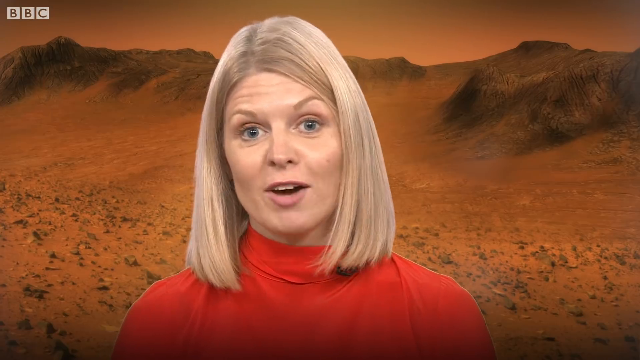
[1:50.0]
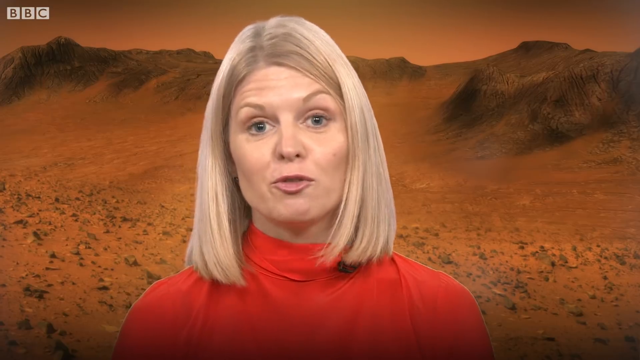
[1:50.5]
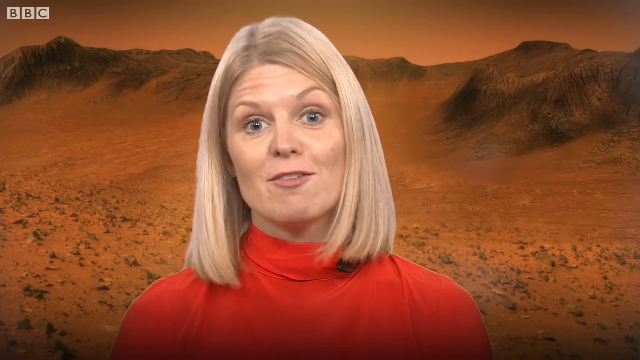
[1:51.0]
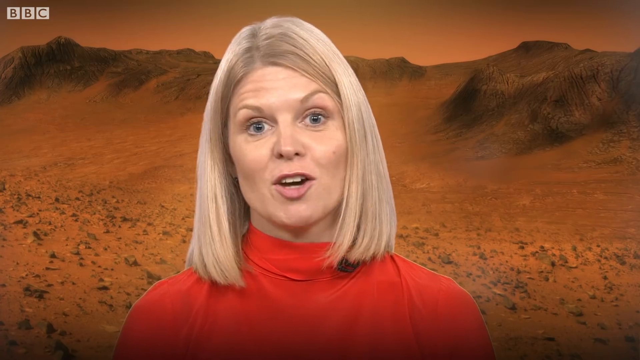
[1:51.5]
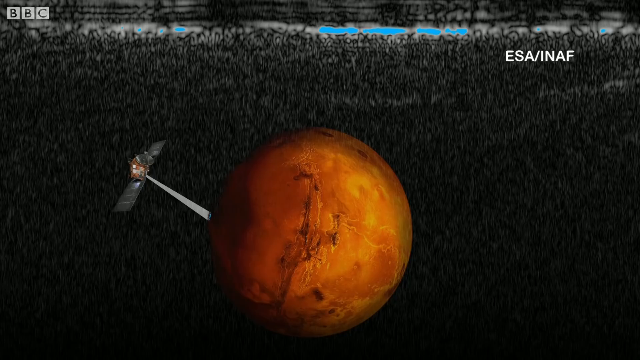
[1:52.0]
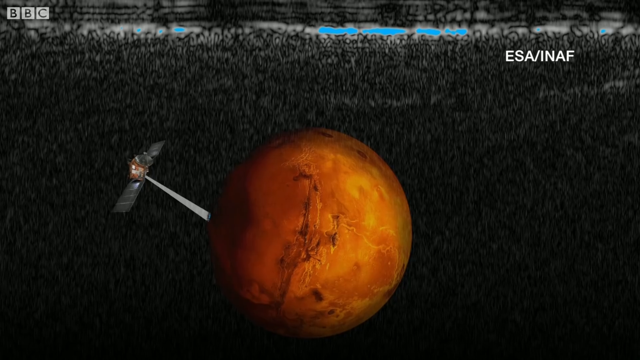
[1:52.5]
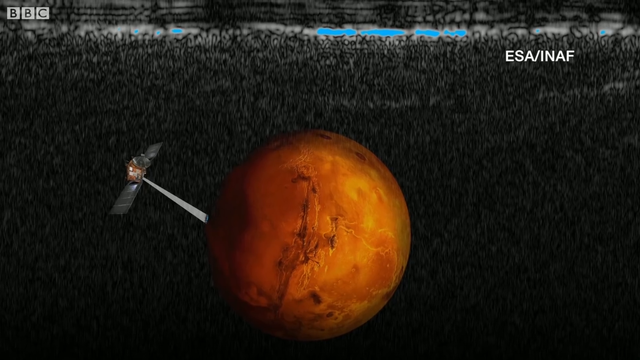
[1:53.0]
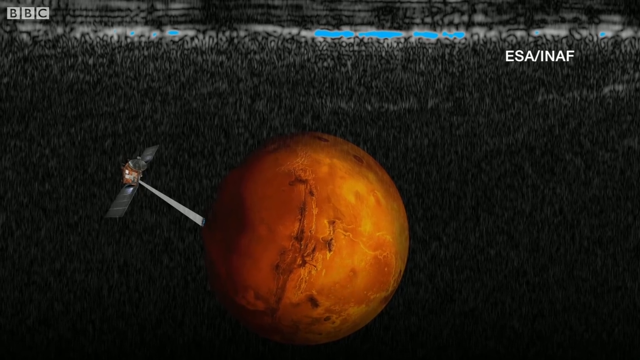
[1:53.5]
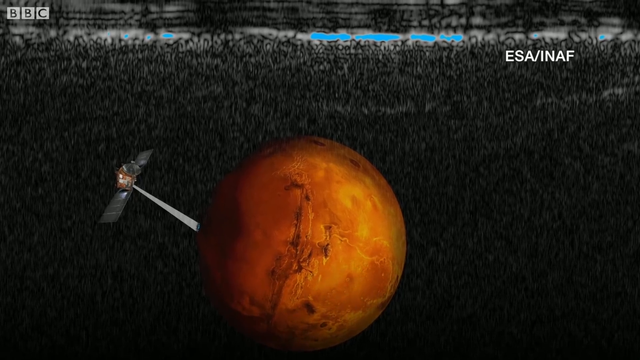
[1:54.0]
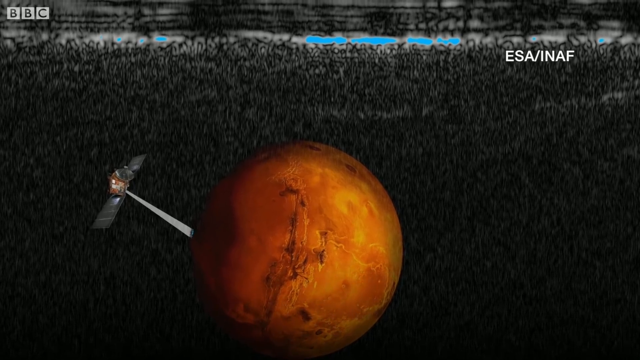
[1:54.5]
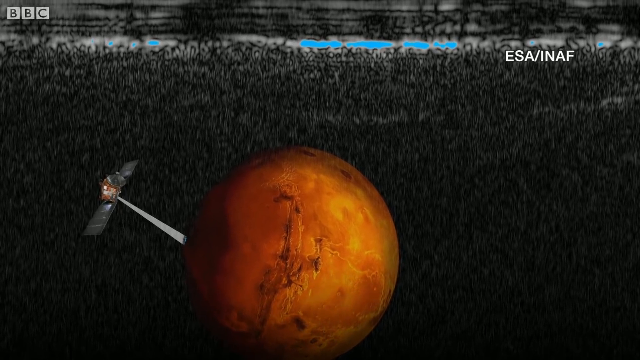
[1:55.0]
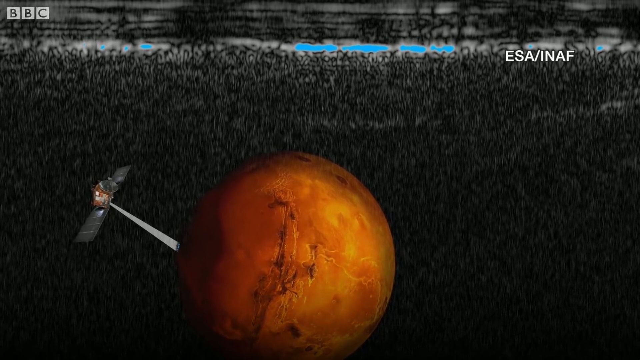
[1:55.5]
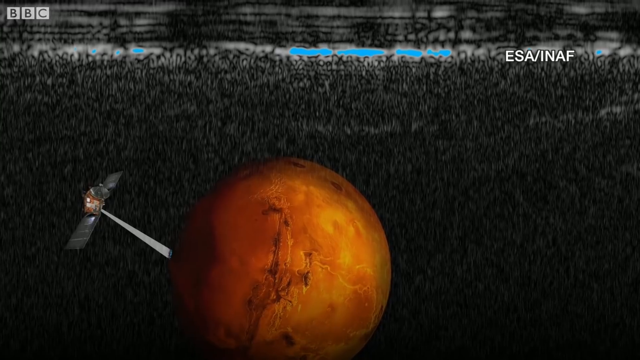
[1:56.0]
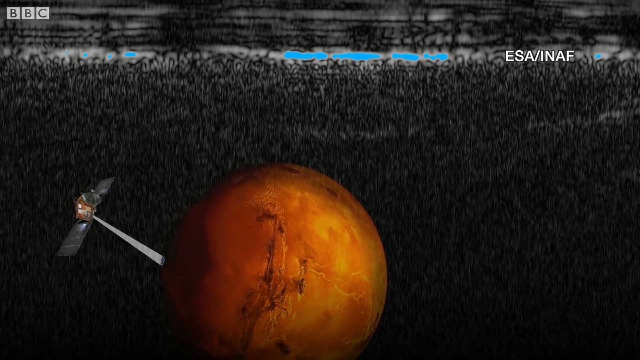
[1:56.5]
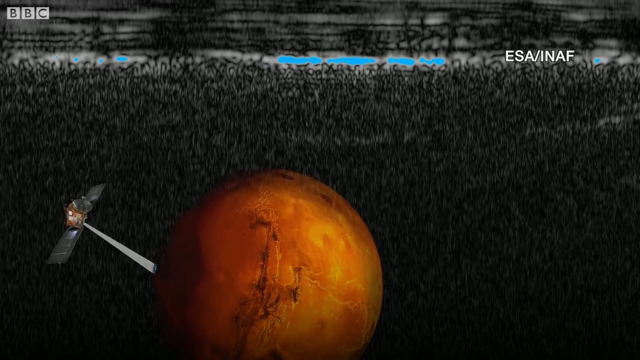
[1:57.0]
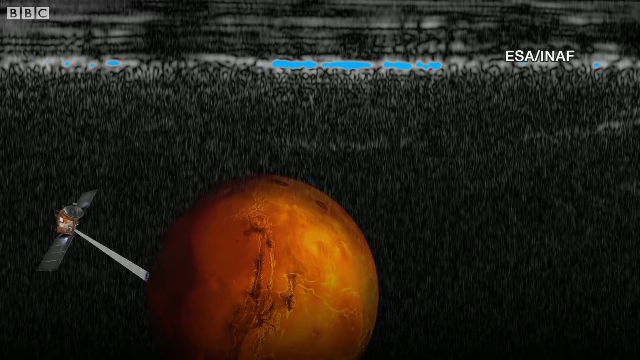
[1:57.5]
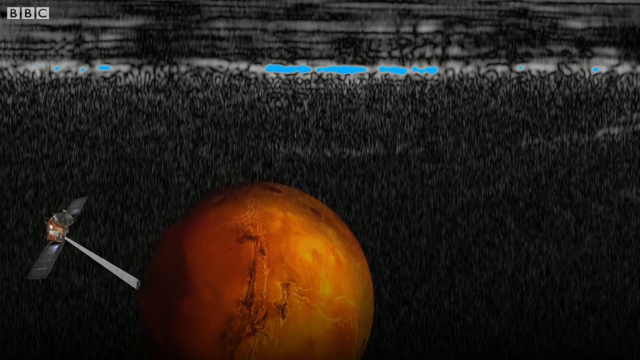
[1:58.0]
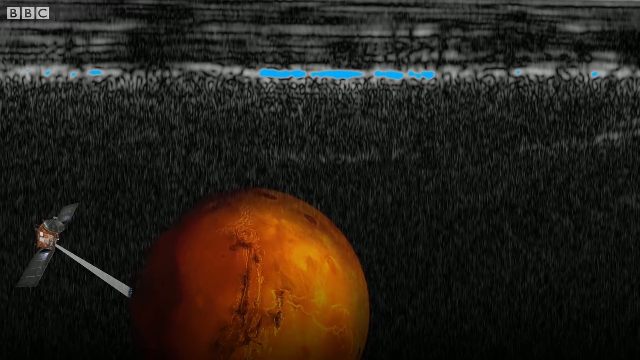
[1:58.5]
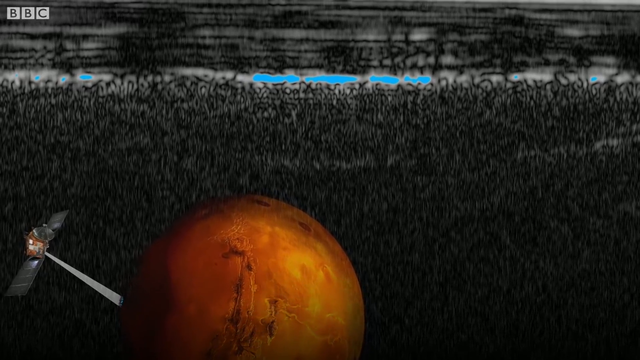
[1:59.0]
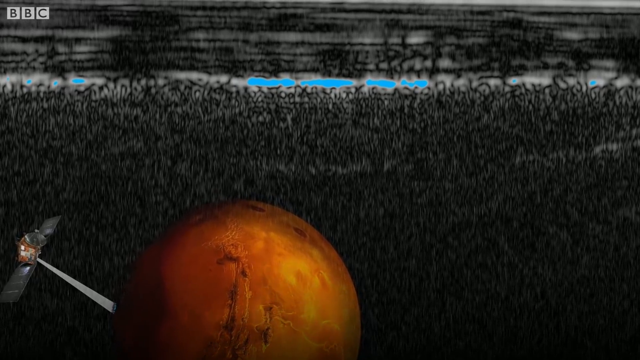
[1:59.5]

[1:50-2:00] A BBC screen shows the BBC logo at the top left, with a woman in a red top talking; she has a microphone attached near her neck. The woman then disappears under a page with the writing "ESA/INAF" at the top right. The page has a dark background with a sketch of what looks like plants, and the animation zooms in slowly on it. The dark background looks like a drawing of plants and some buildings. A small bit of clear blue sky appears in the distance, far from the main background, and from there an orange-like NASA object appears as an extension of something that looks like a satellite.